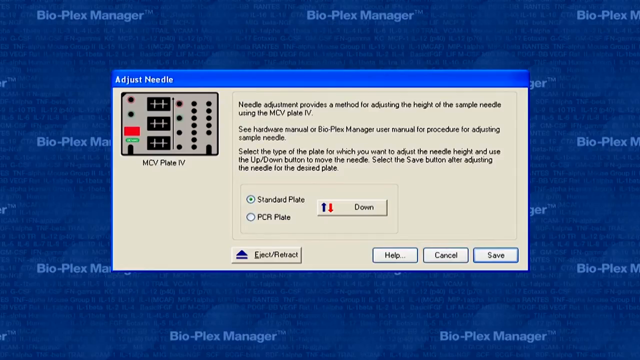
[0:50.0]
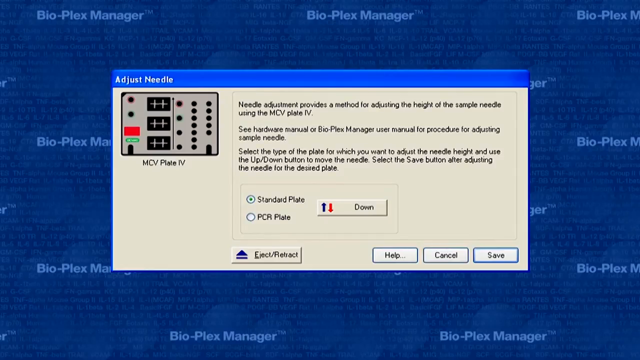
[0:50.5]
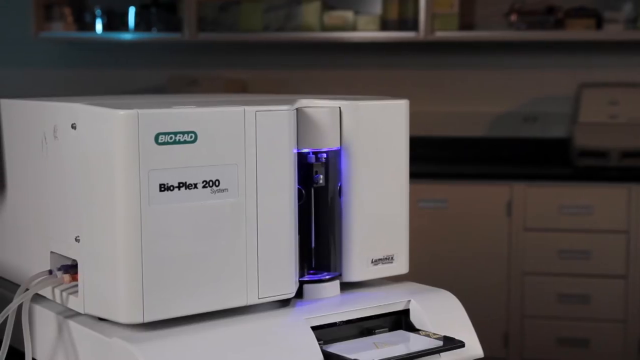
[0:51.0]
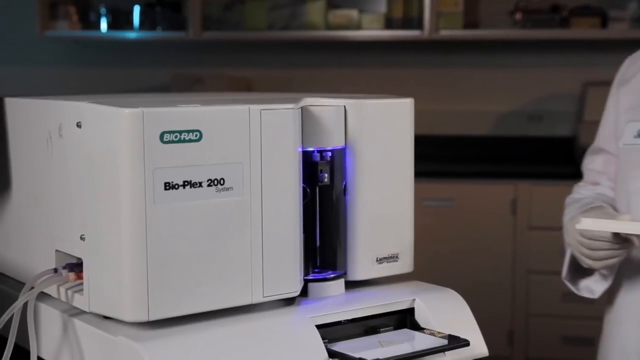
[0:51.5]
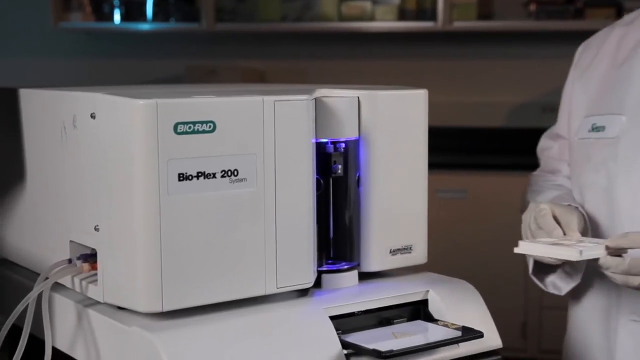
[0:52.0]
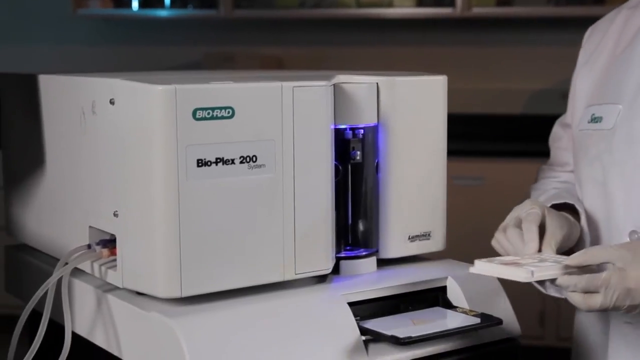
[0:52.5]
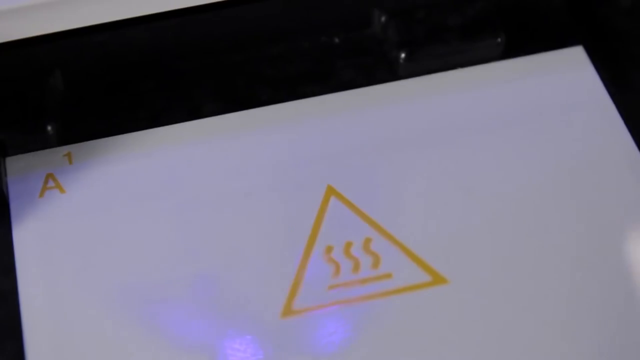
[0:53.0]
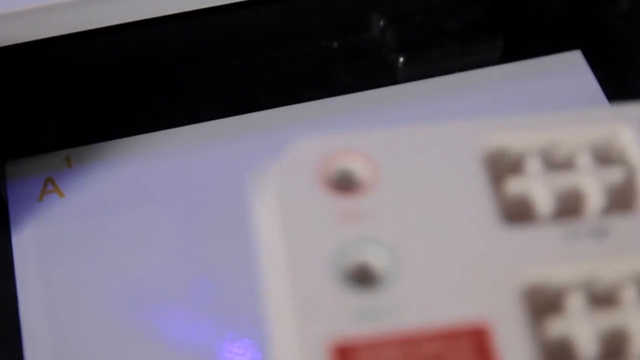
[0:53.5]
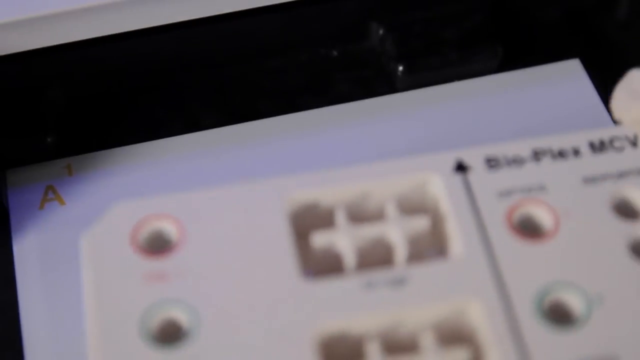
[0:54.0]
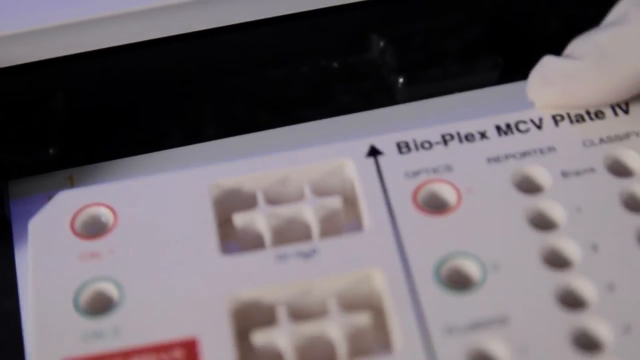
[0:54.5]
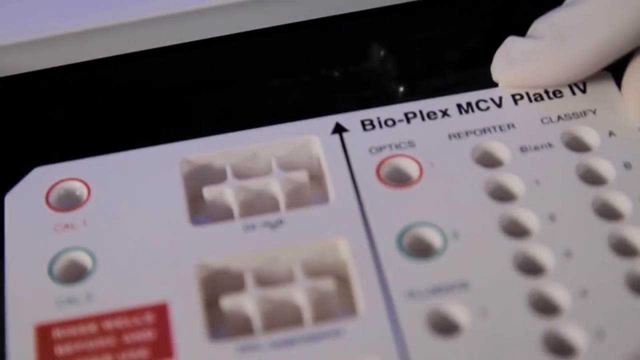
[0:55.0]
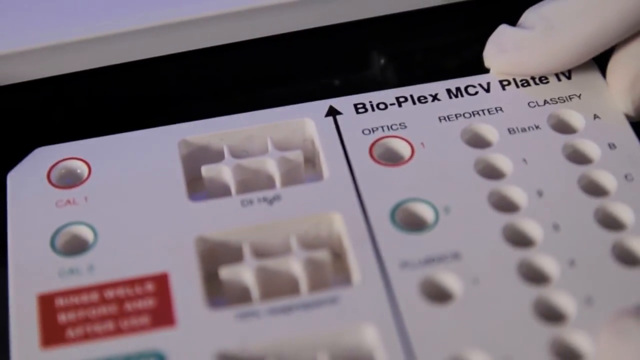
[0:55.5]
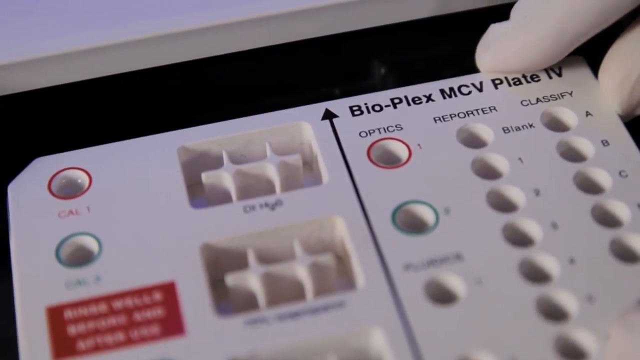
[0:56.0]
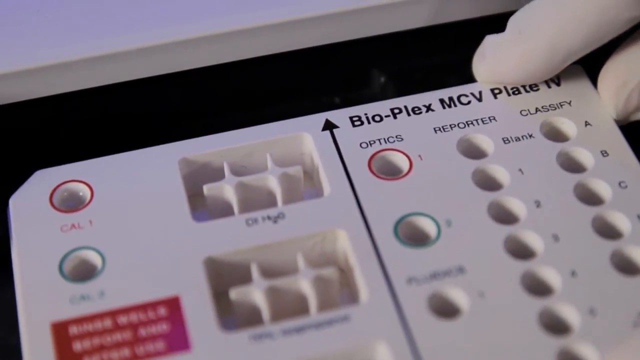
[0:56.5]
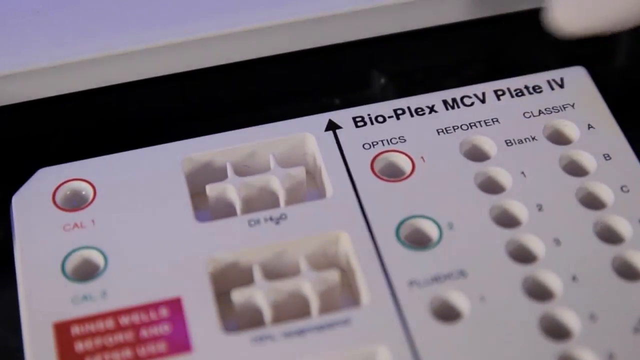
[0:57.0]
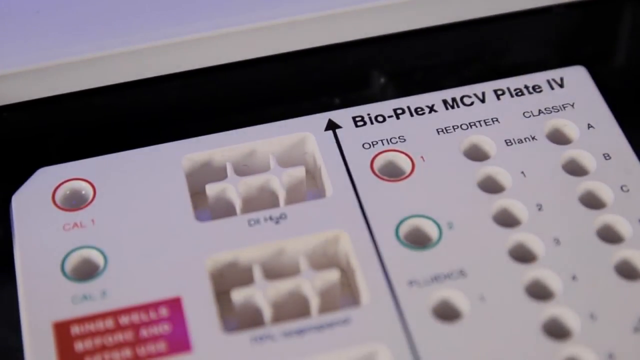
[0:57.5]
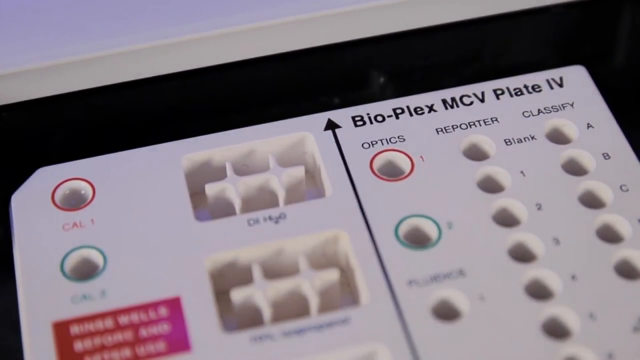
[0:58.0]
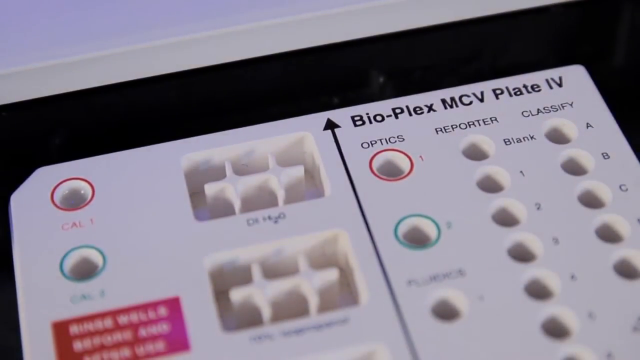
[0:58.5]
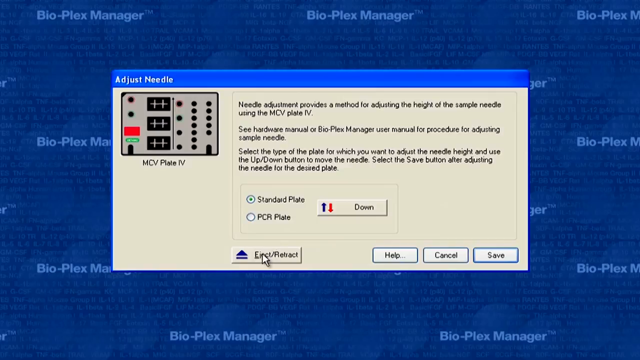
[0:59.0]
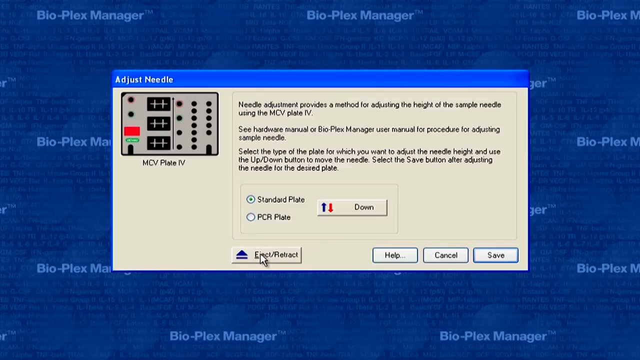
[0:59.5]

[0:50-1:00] A program window is shown on a computer. Its background is blue with eight instances of the words "Bio-Plex Manager" in white text. In the middle of the window is a pop-up labelled "Adjust Needle." The video fades to a medical office with a countertop, shelves and cabinets in the background. On the left side of the frame is a white machine with the green BIO RAD logo on the left side of its front, and beneath that, in black text, a section that says "Bio-Plex 200." On the right side of the machine is a section with a metallic needle highlighted with purple lights. On the right side of the frame is a person in a white lab coat and white gloves holding a white plastic object in both hands. The person walks to the left and gently places the white plastic object down on the machine. The angle changes to a close-up of the white plastic object being placed onto the side of the machine. The object is rectangular, and black text on its upper right section says "Bio-Plex MCV Plate IV." The lab person gently presses the object down with the pointer finger and thumb of their right hand. The video fades to the program window, with the cursor hovering over a button in the lower left part of the "Adjust Needle" pop-up, labelled "Enact/Retract" in black text.